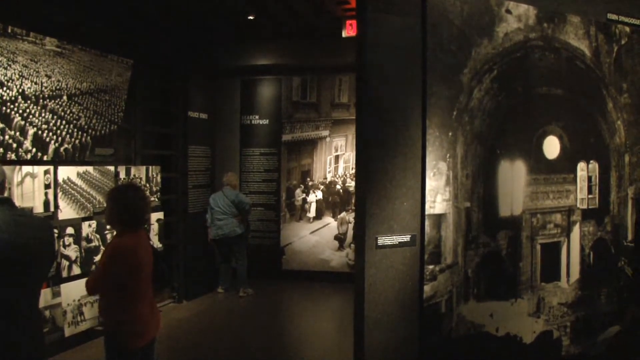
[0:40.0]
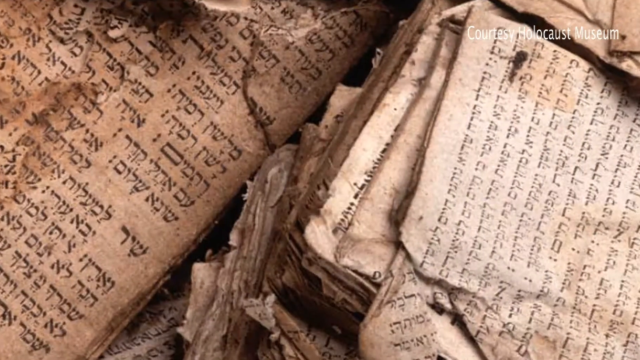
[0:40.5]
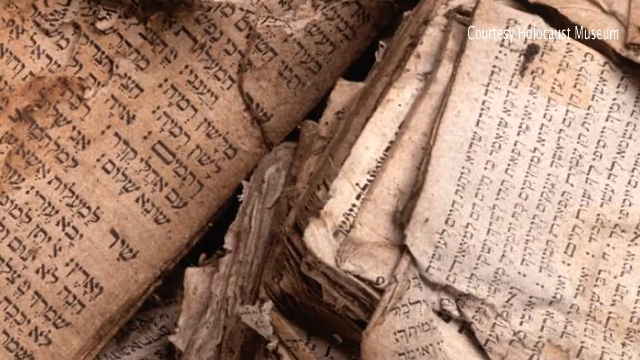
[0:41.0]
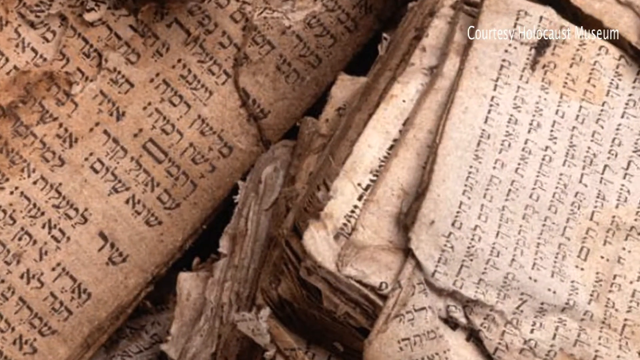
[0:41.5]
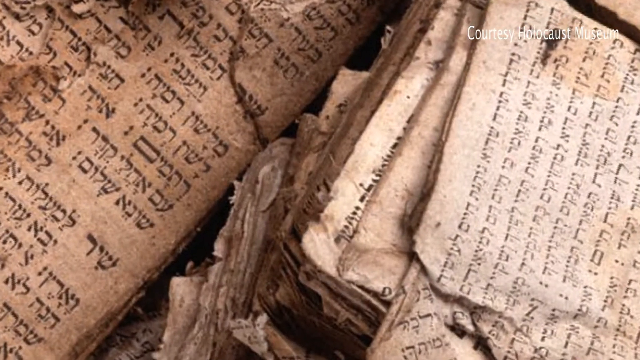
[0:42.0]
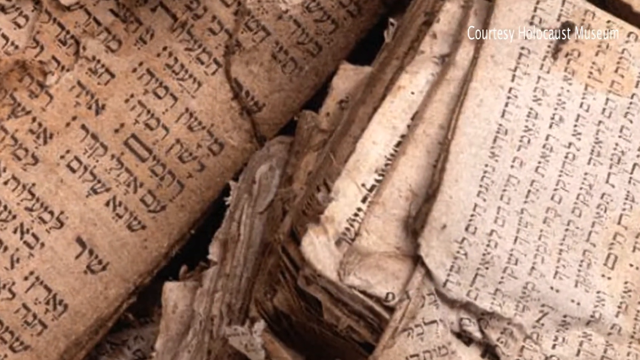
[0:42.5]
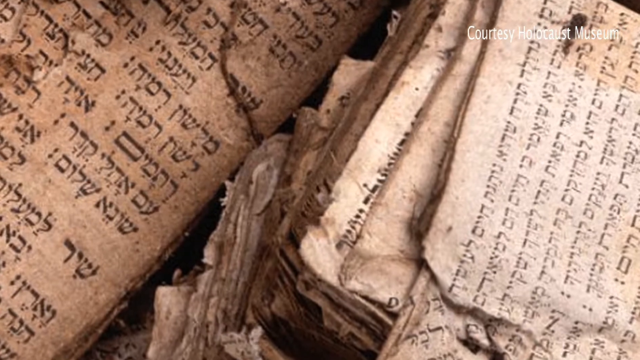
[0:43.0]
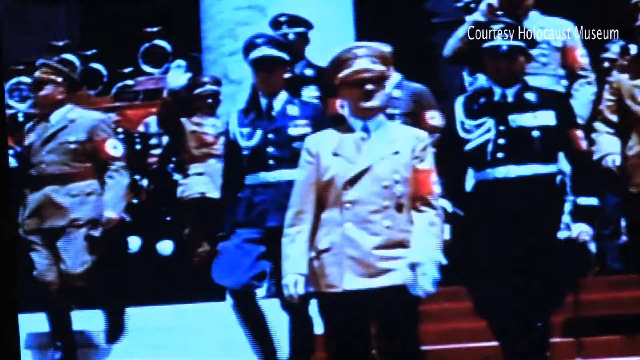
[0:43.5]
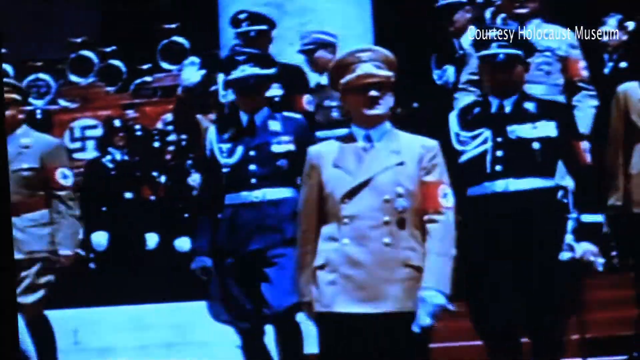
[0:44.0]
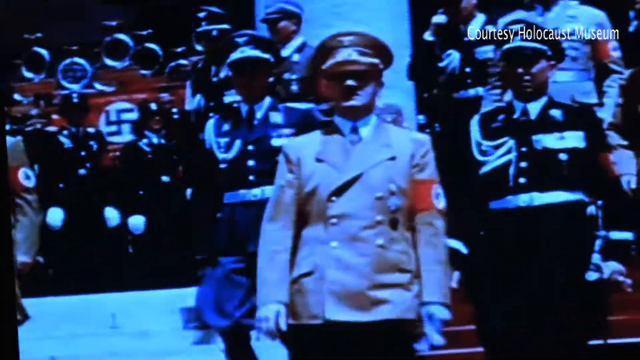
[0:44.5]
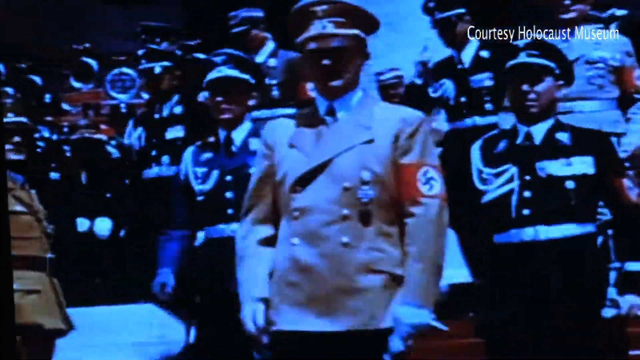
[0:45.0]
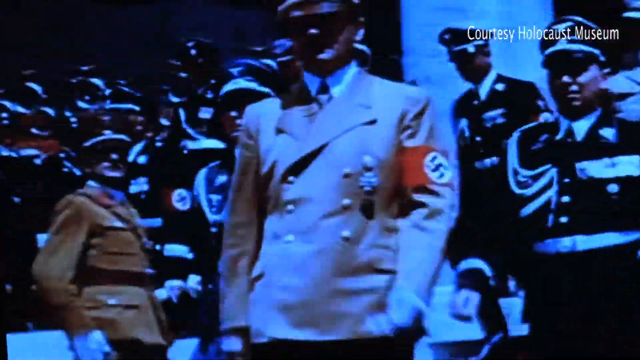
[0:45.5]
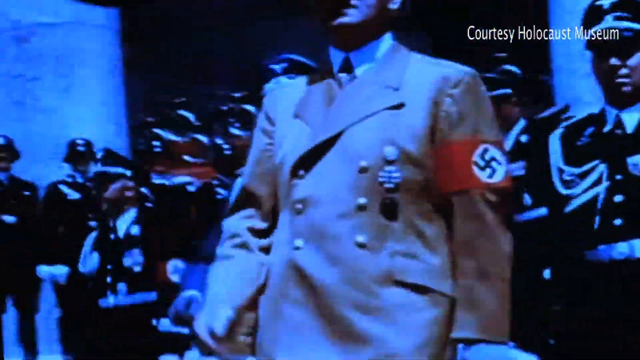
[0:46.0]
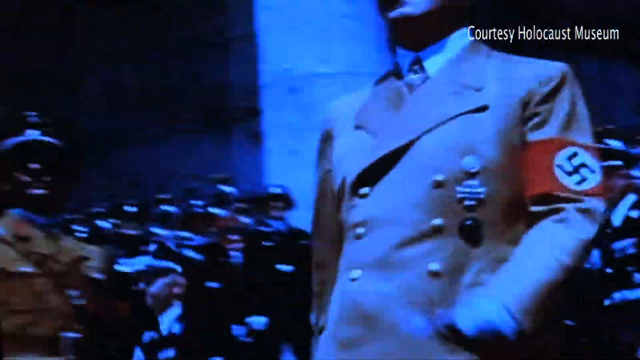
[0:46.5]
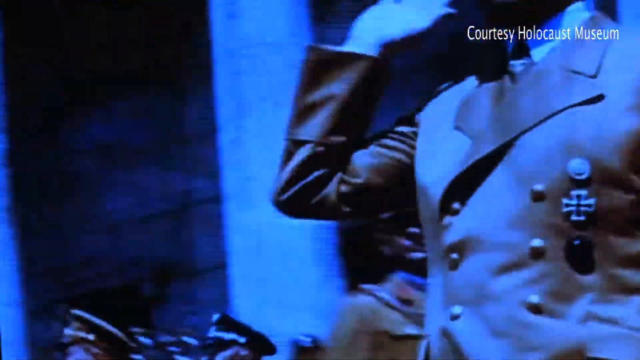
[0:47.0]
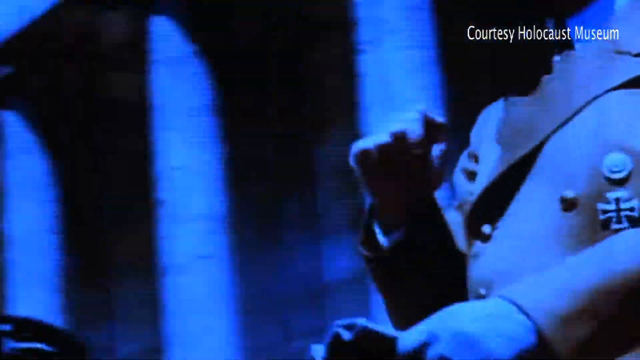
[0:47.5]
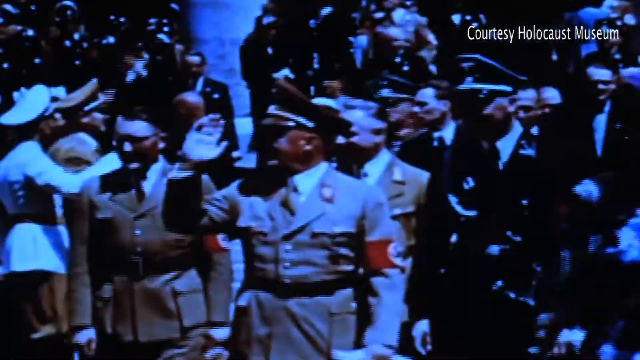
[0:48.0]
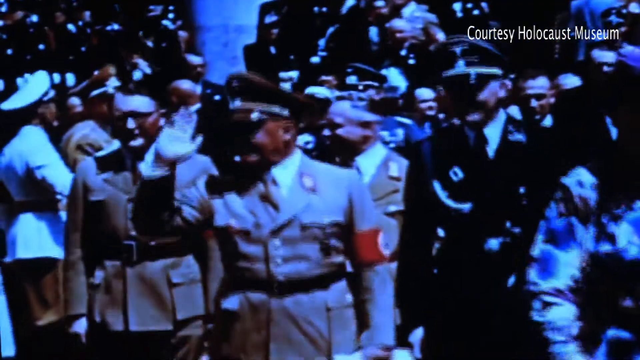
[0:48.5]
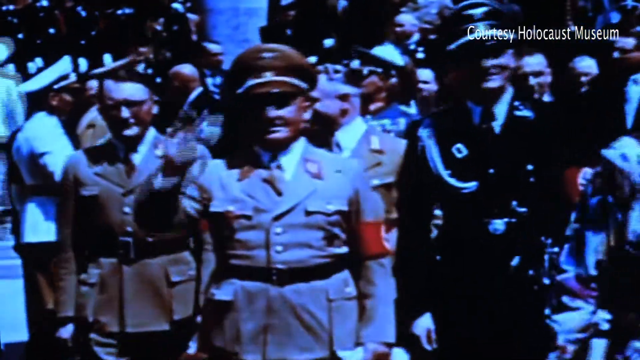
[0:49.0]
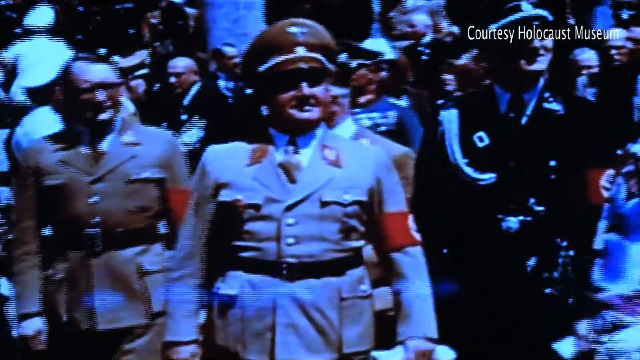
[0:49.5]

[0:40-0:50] The video begins with a parade, then shows Jill Polly, a Kristallnacht survivor, followed by a picture of her as a child. Two storefronts of Jewish buildings are shown destroyed, followed by Hebrew writing and the Talmud. Two men stand in front of a building, holding onto each end of a large document. Wires are broken in windows. In a museum, someone looks at pictures. The Talmud appears again. Men dressed in Nazi uniforms with Nazi insignia on their arms walk along a parade line; they are not marching but walking very casually, looking very happy, and waving to the people.